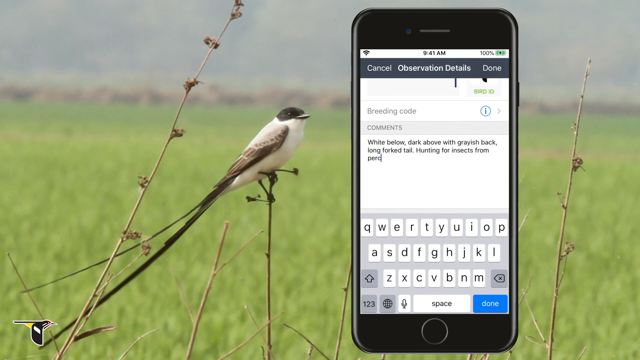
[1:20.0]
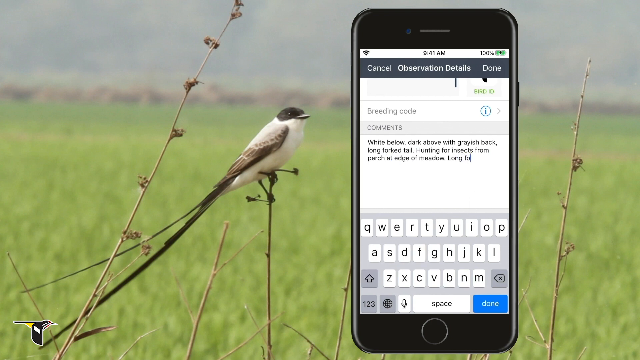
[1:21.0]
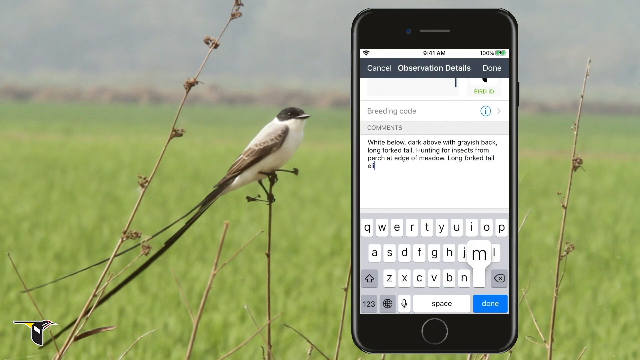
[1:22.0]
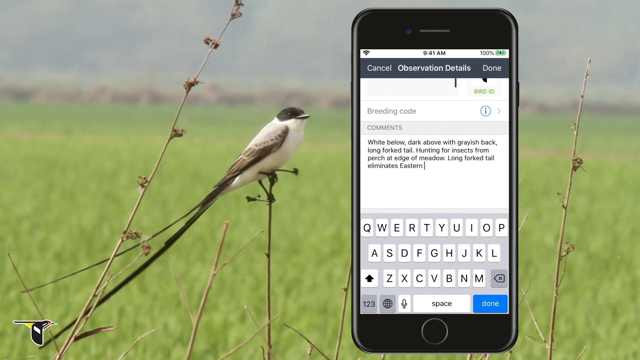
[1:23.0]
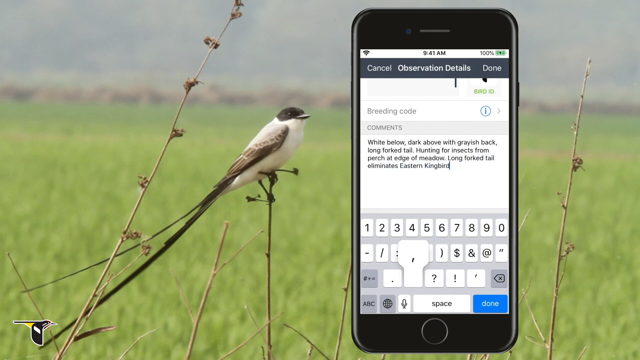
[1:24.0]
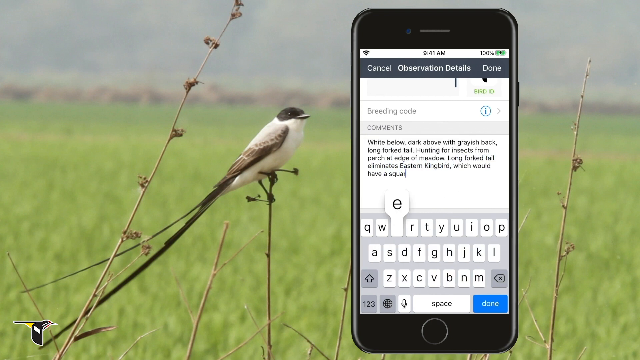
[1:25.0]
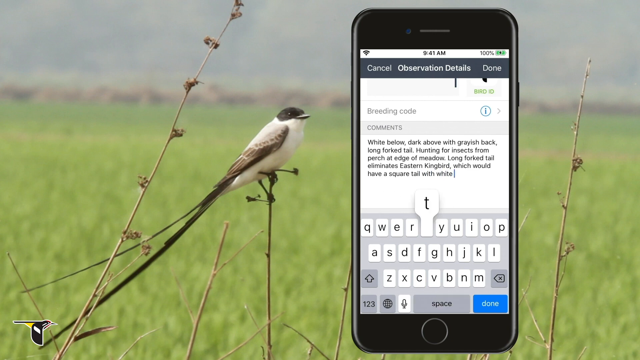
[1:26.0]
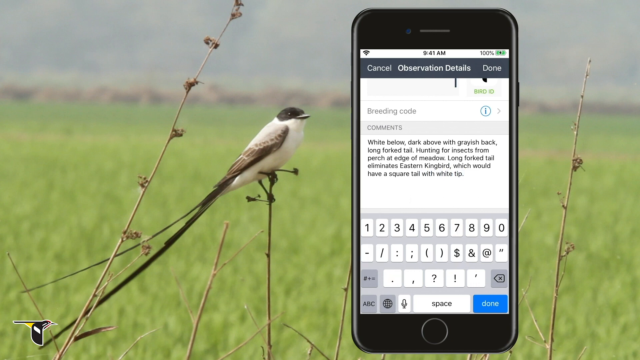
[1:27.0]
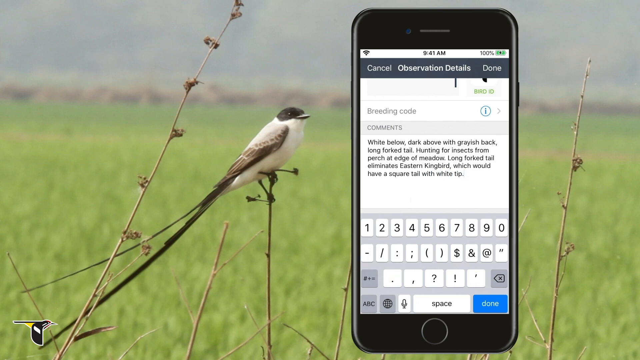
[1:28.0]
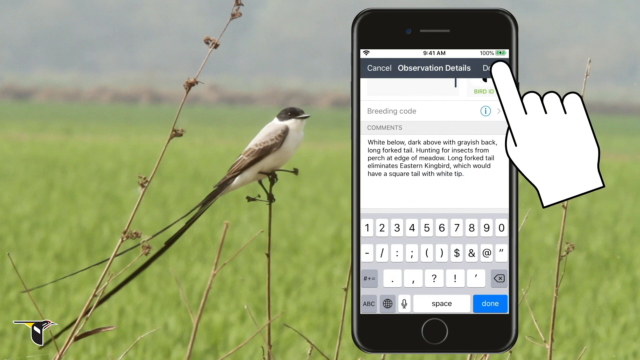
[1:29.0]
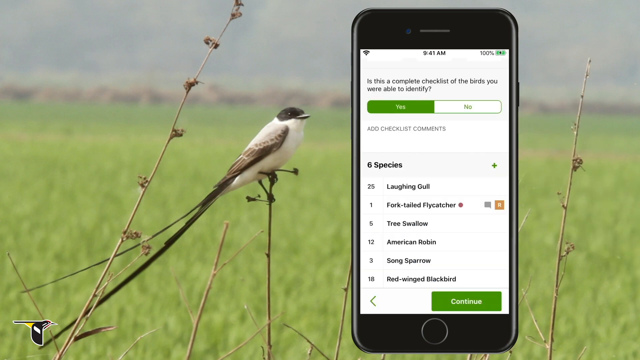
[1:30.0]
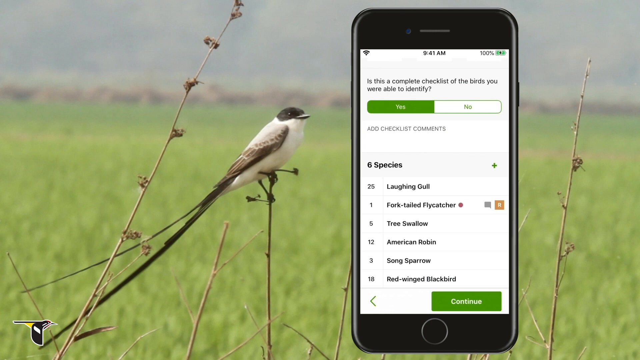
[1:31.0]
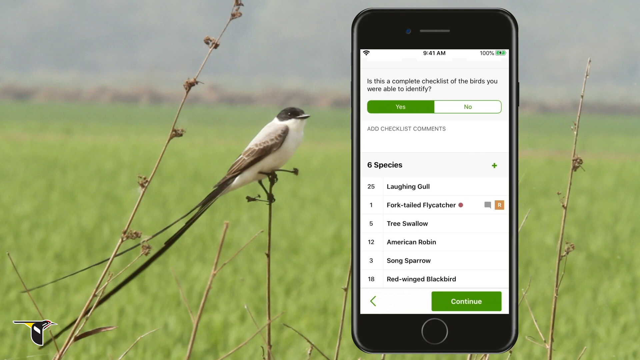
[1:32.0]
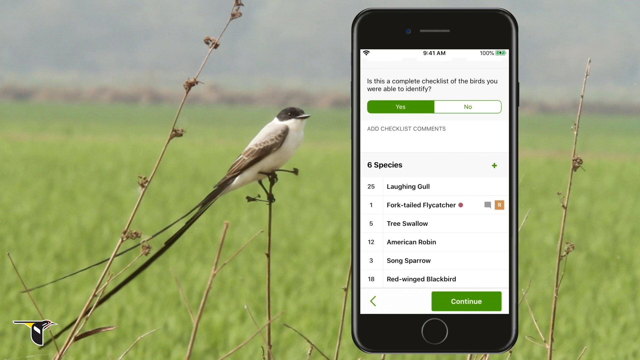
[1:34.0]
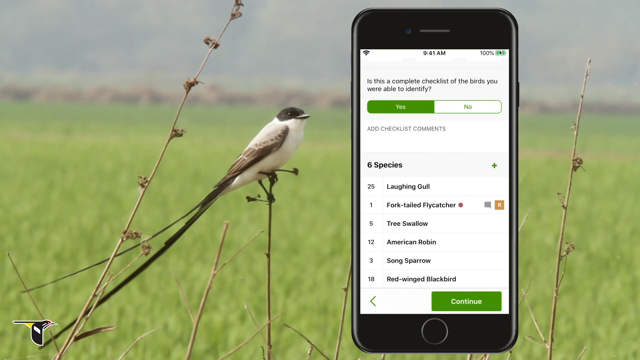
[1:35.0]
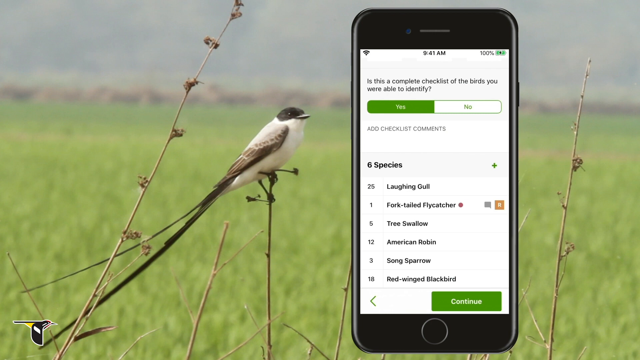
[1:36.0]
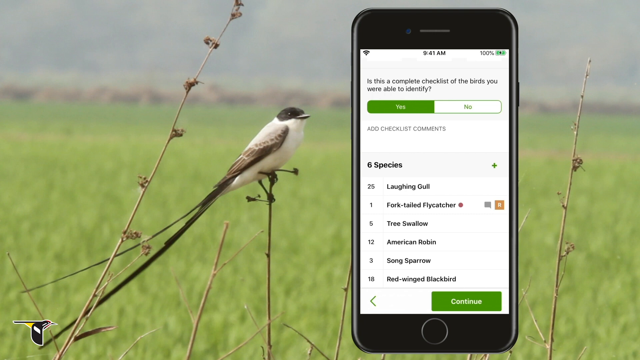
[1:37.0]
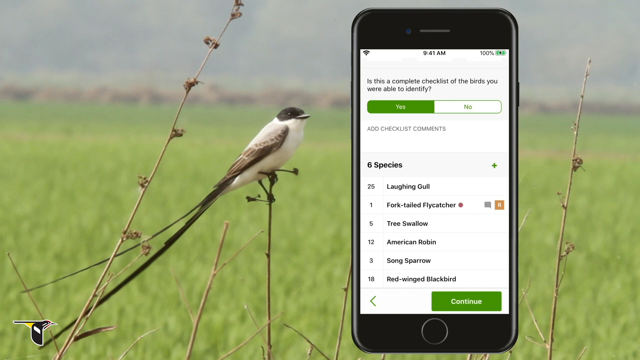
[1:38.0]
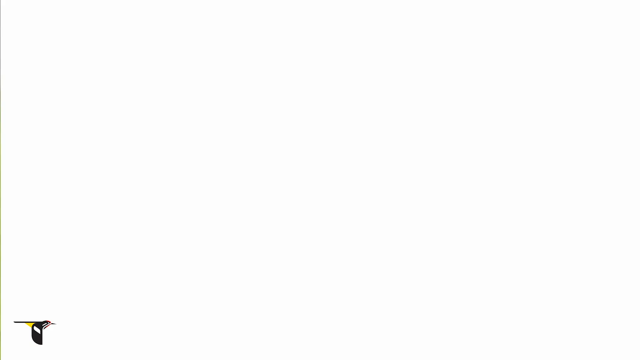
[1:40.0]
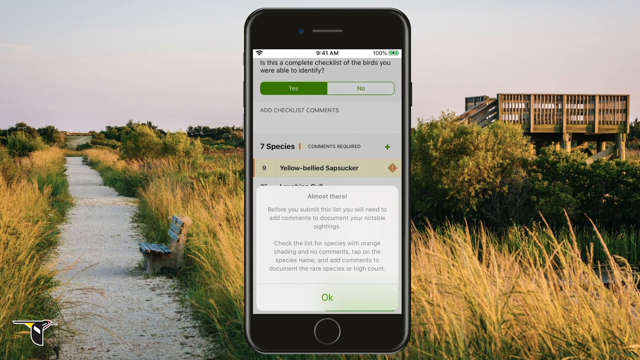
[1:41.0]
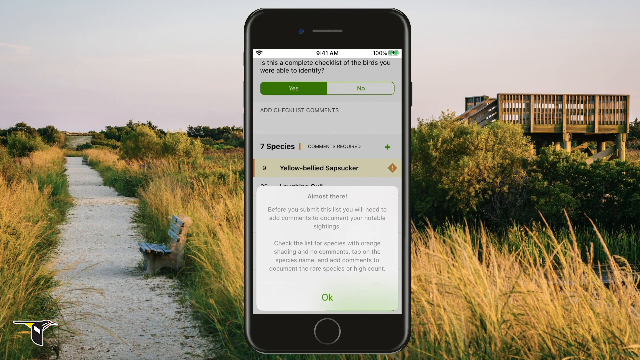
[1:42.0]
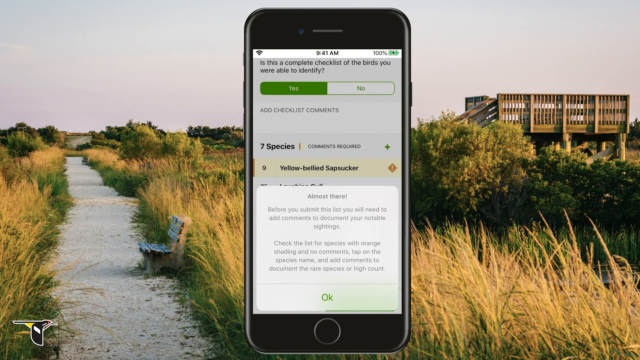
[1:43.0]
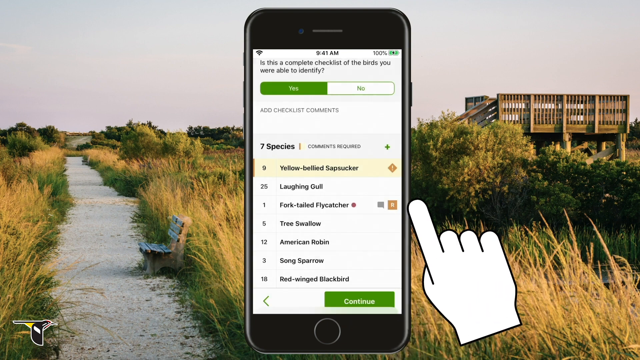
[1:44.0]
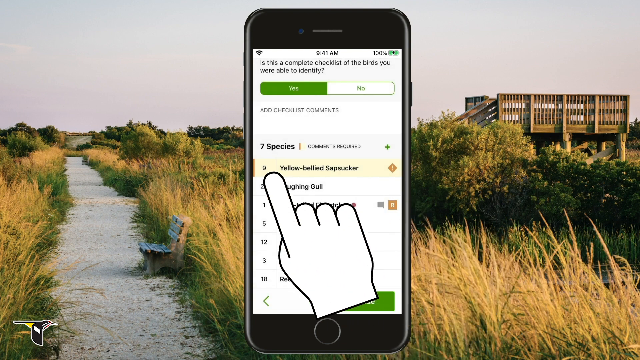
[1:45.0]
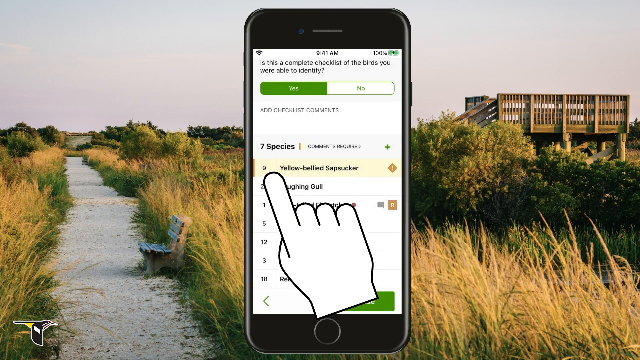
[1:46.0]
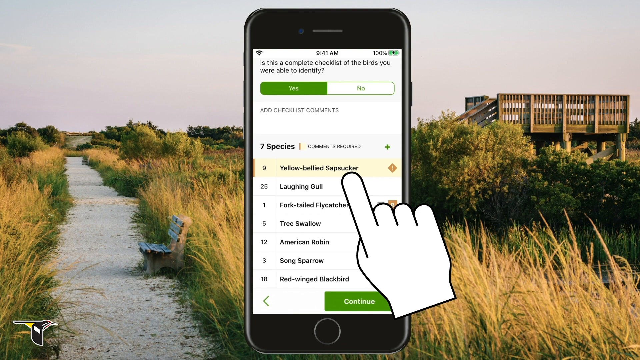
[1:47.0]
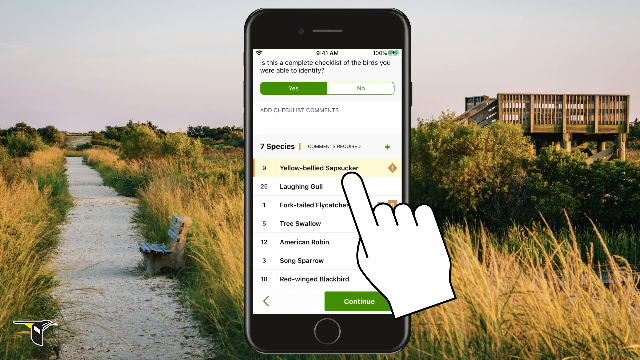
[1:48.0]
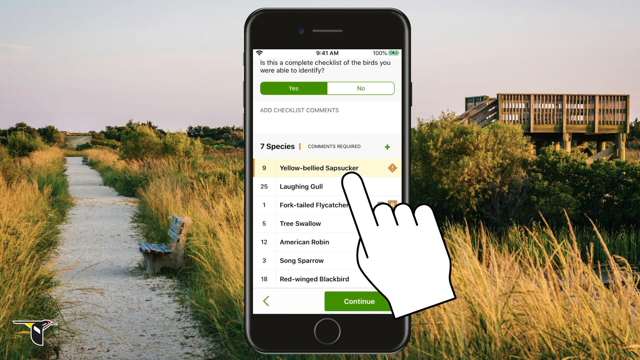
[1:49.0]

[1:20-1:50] The split-screen view continues, with the flycatcher on the left-hand side and the app being operated on the other side. The comments section is open on the observation details page, and comments are being entered: "white below, dark above with grayish back, long forked tail, hunting for insects from perch at edge of meadow. Long forked tail eliminates", with the comment going on to mention the Eastern Kingbird. A cartoon hand comes in and closes out of the page, apparently because the observation is done, and the view returns to the species list.